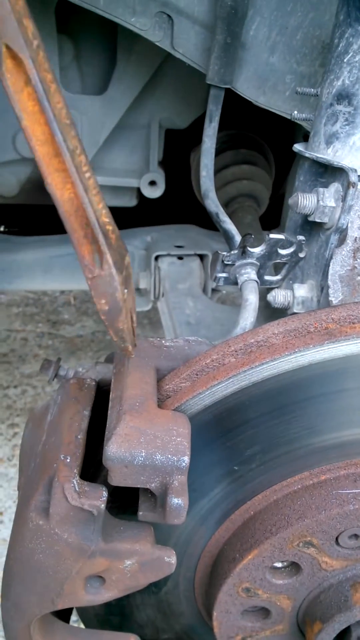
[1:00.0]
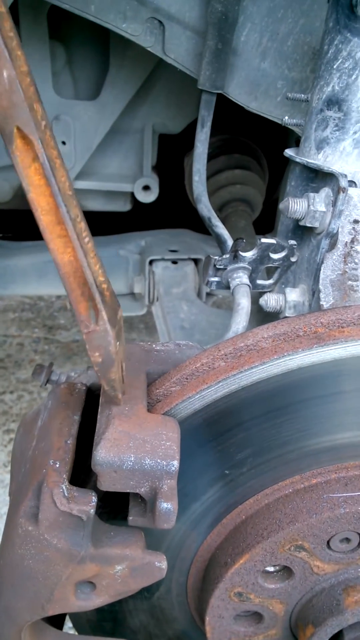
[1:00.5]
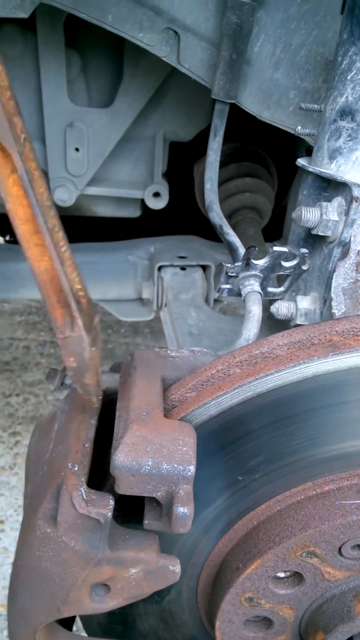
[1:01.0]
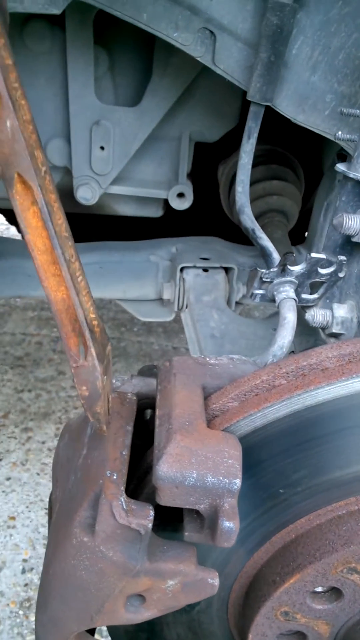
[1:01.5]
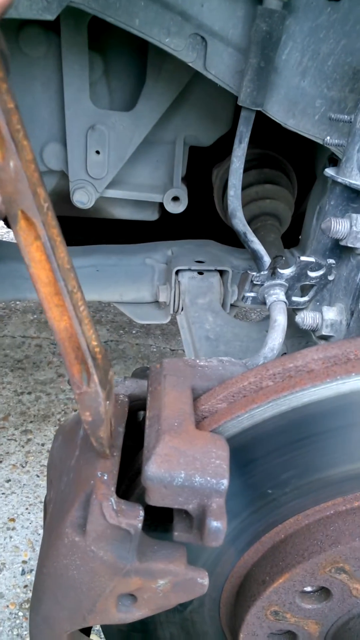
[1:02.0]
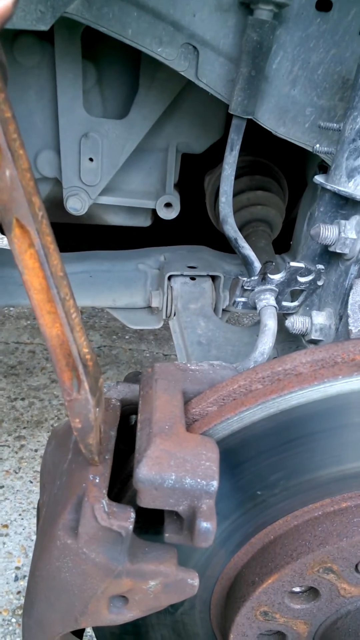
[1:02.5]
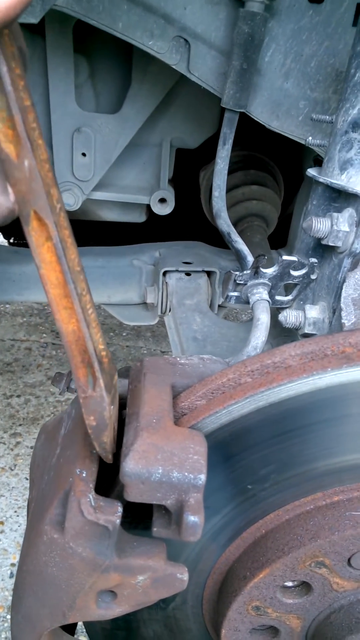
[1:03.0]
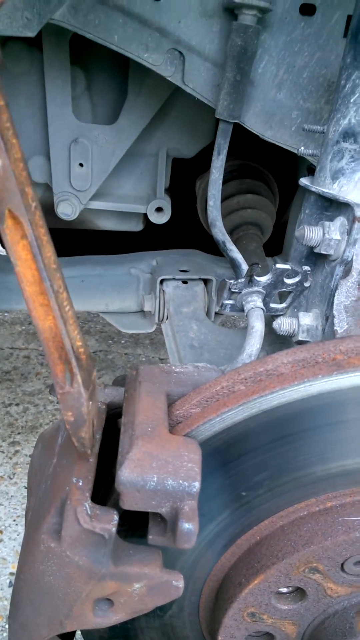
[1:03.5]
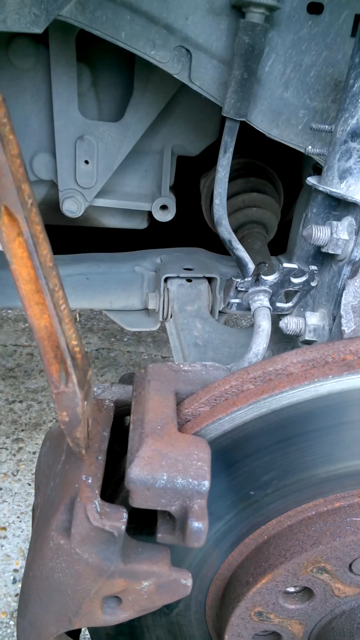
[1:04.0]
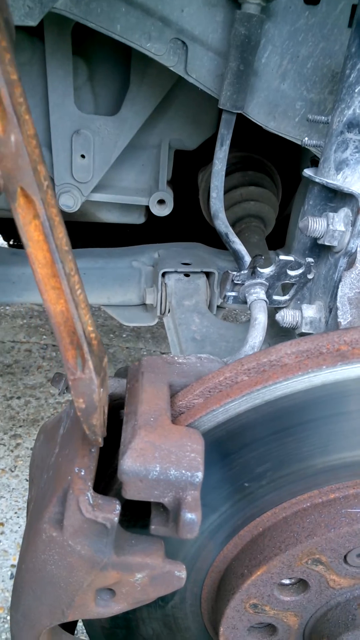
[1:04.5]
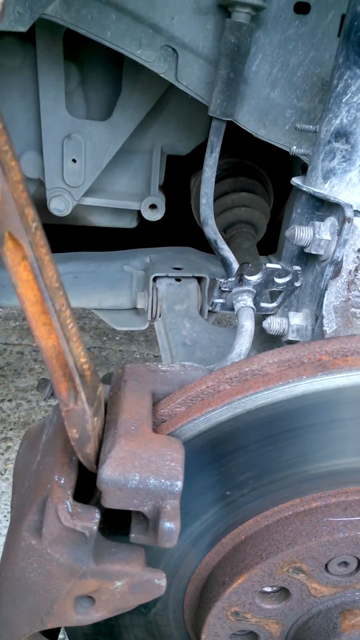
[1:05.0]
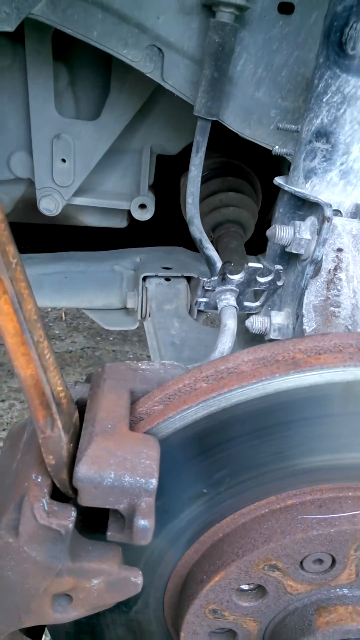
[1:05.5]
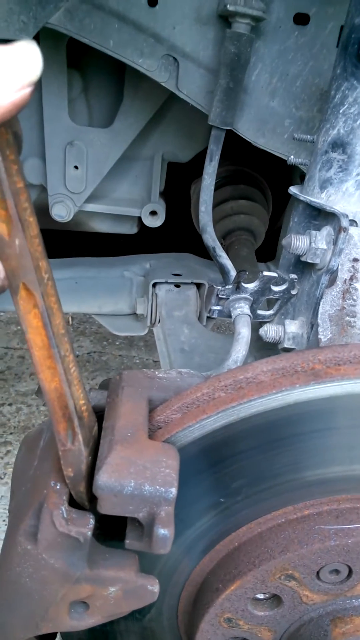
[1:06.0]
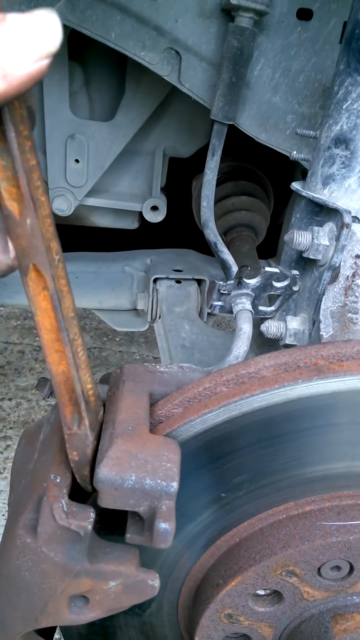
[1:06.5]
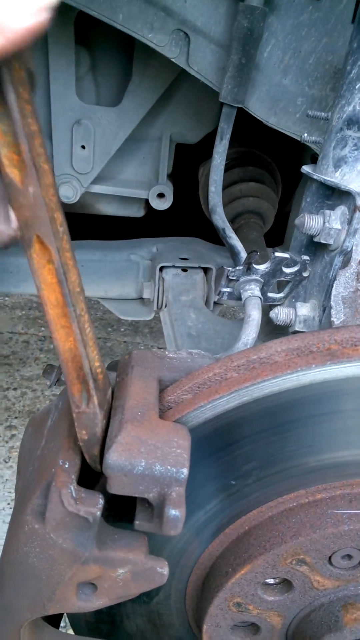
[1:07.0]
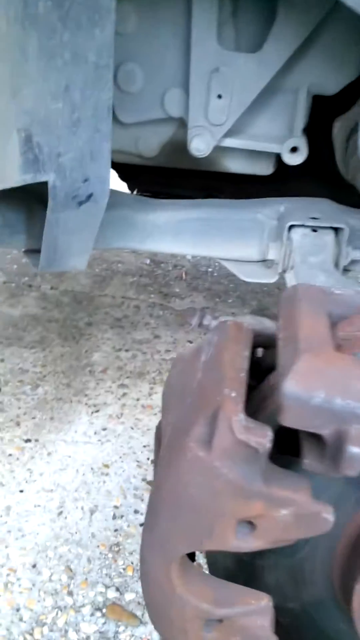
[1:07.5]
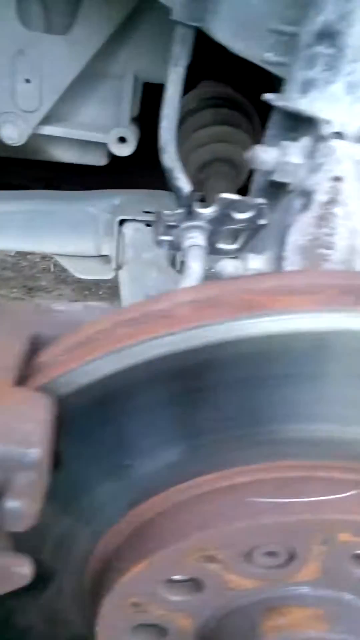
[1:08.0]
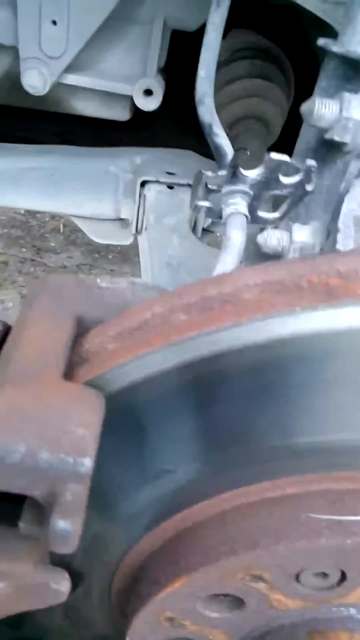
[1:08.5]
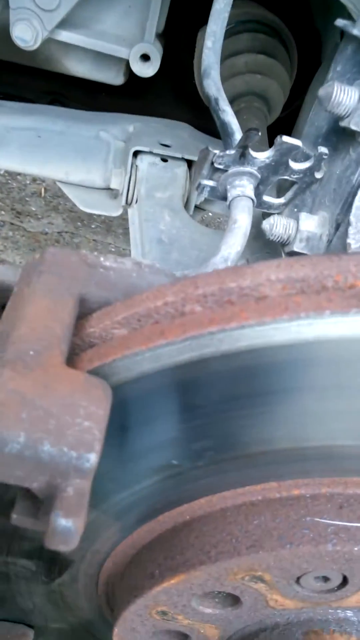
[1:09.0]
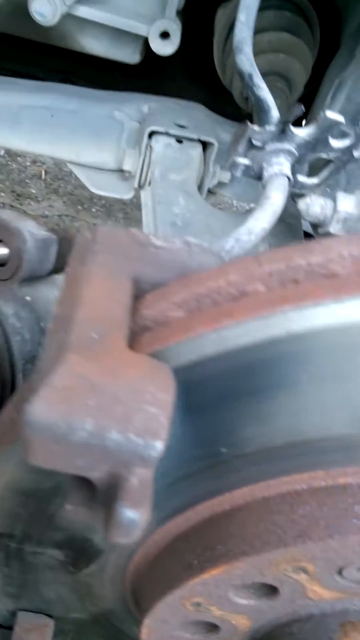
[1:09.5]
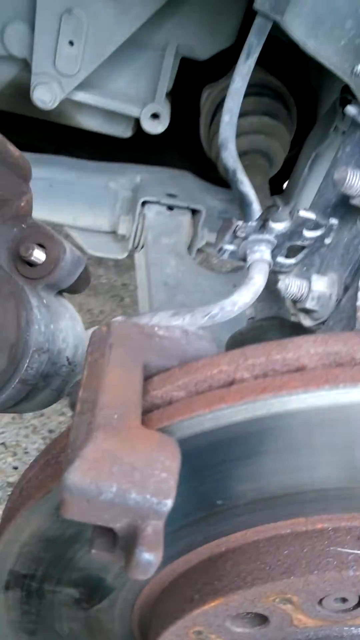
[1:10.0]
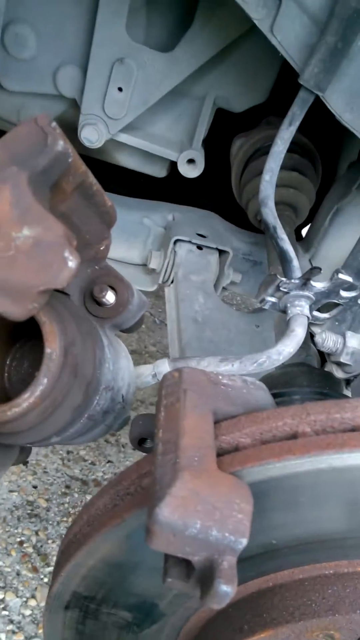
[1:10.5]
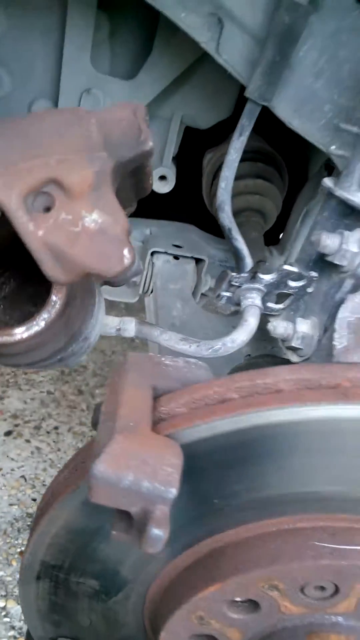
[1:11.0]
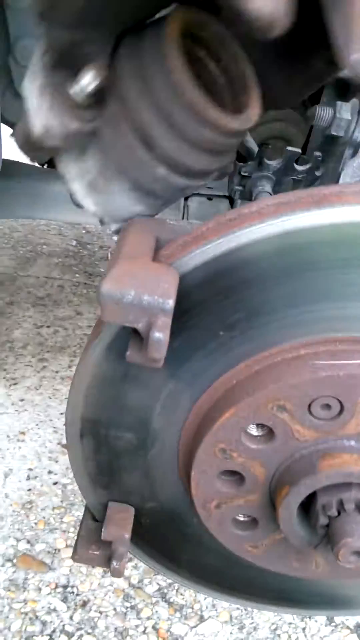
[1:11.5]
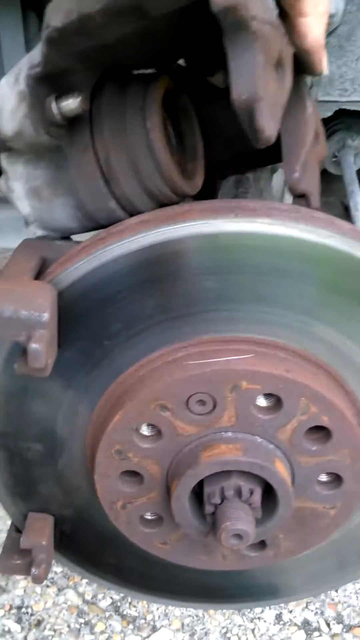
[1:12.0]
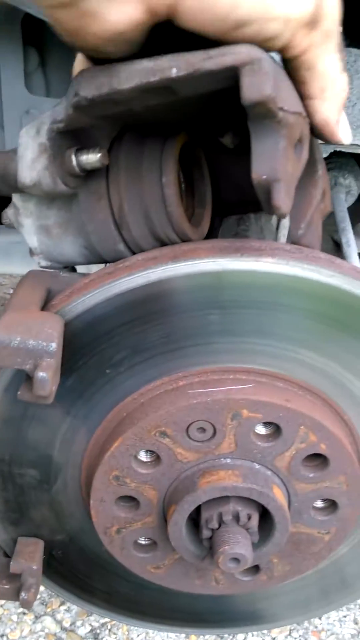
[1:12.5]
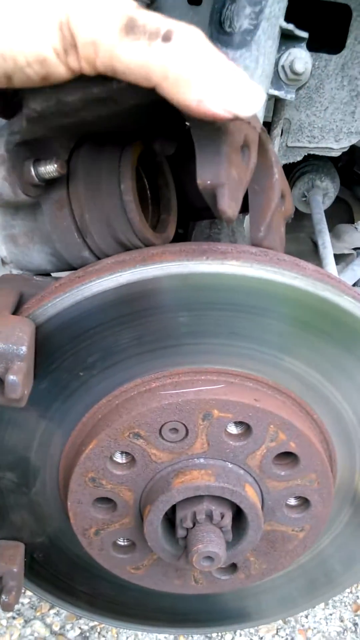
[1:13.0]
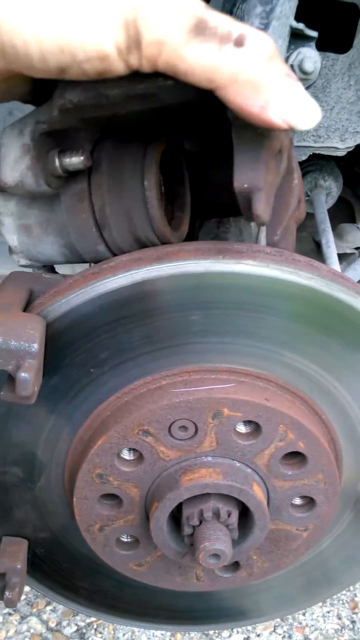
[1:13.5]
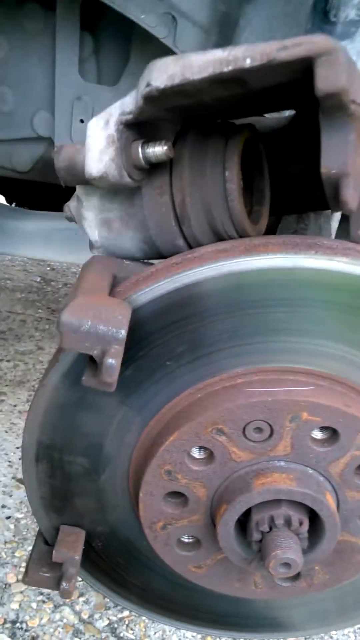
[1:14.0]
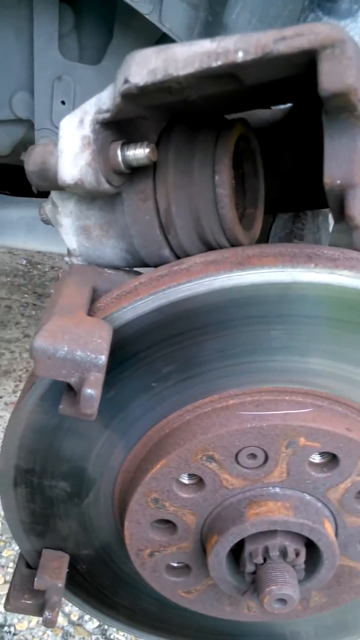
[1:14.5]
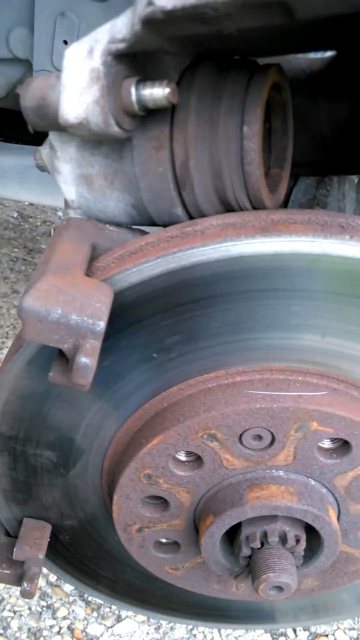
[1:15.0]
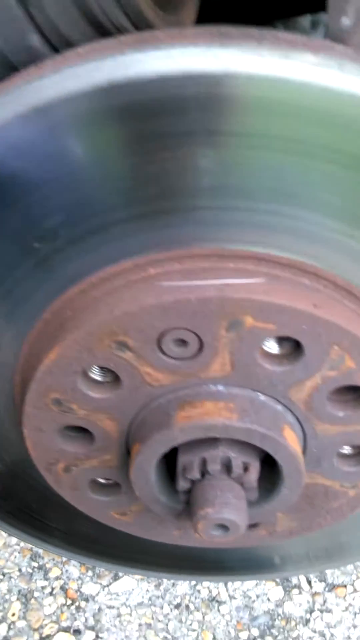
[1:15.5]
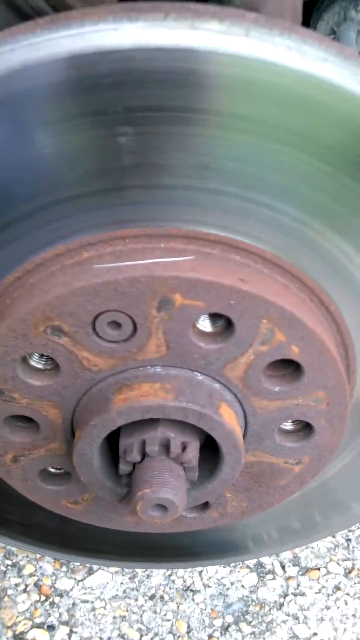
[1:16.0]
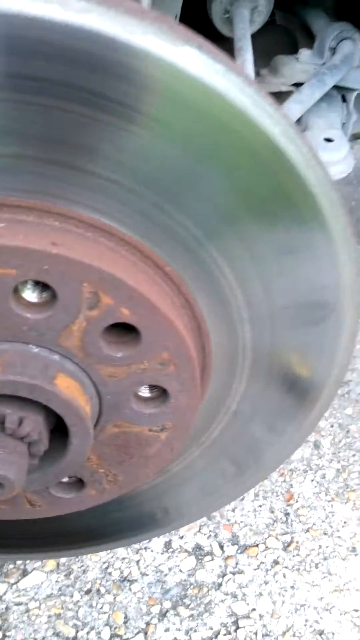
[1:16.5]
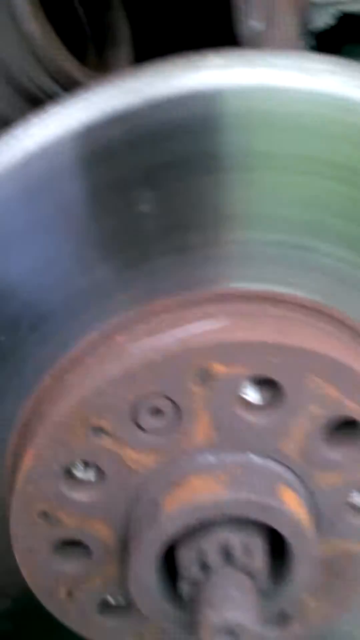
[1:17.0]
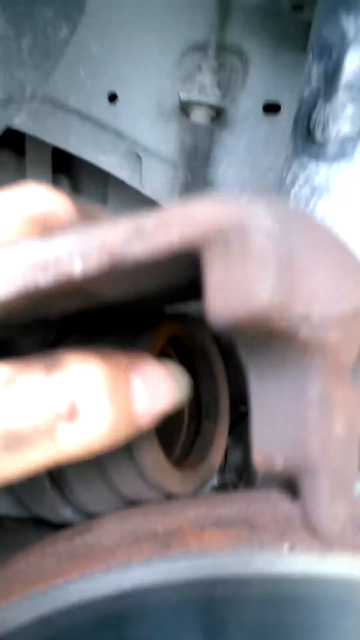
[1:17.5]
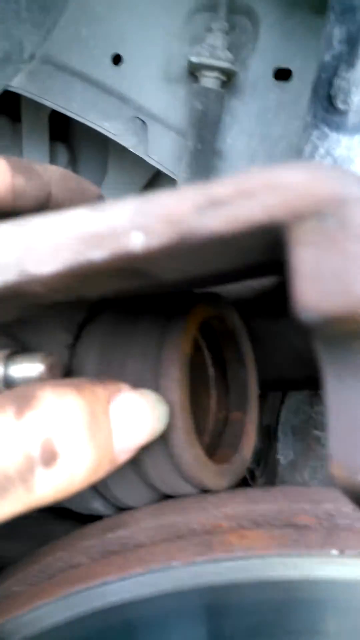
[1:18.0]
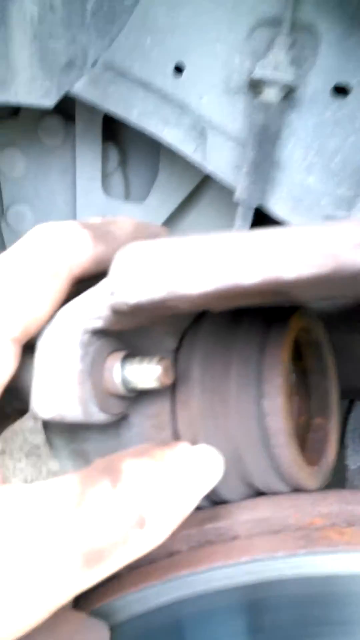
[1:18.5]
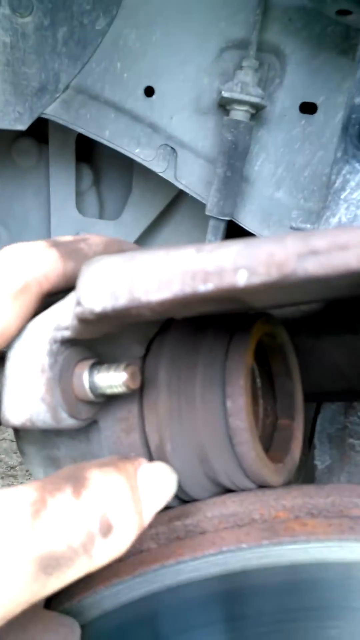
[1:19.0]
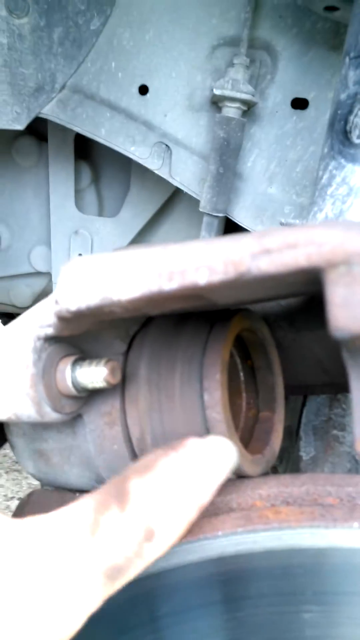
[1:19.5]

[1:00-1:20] In the background there appears to be a lot of silver metalwork, possibly part of a vehicle, while the focal point in the foreground is a silver disc-shaped object with a red, kind of rusty central part. The man has placed a kind of metal clamp on the side of the disc and uses some kind of metal measuring implement to check the spacing between two parts of the disc. Because he is filming by hand, the camera is quite shaky and moves around a lot as he uses his other hand to show different parts. He removes the clamp from the side of the disc, puts it on top of it, and focuses the camera on it. He puts his thumb into something like a hole and holds onto the piece of metal equipment to show it in more detail.